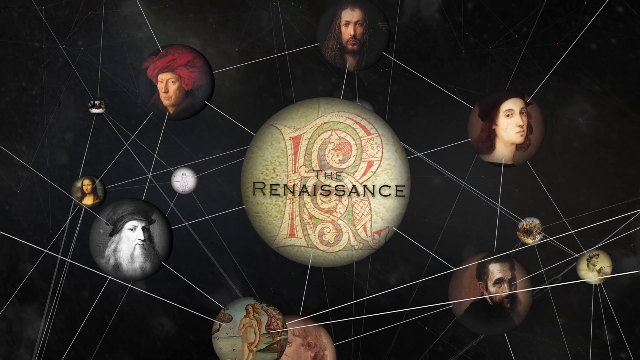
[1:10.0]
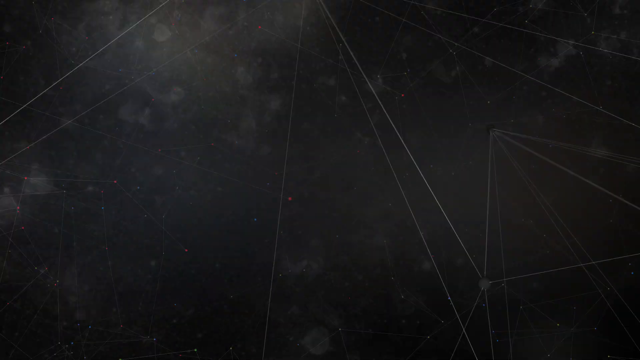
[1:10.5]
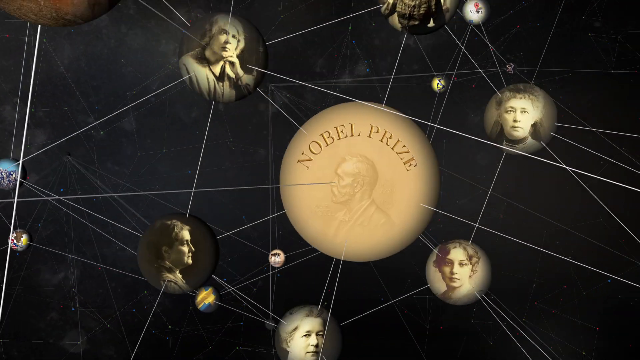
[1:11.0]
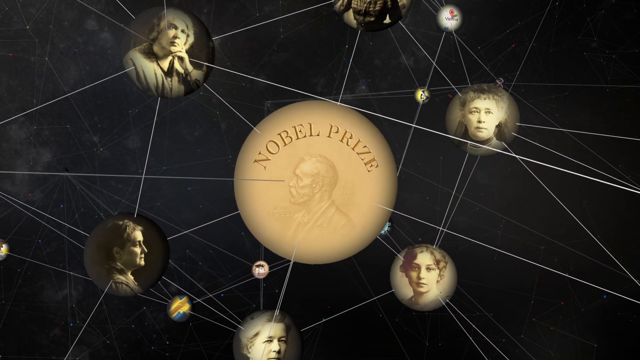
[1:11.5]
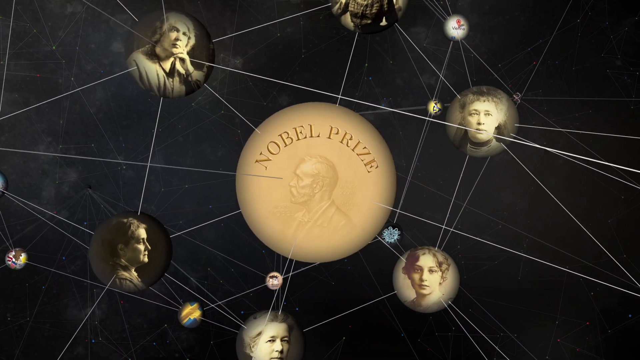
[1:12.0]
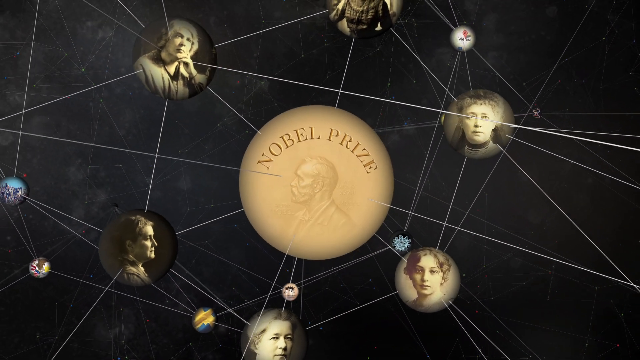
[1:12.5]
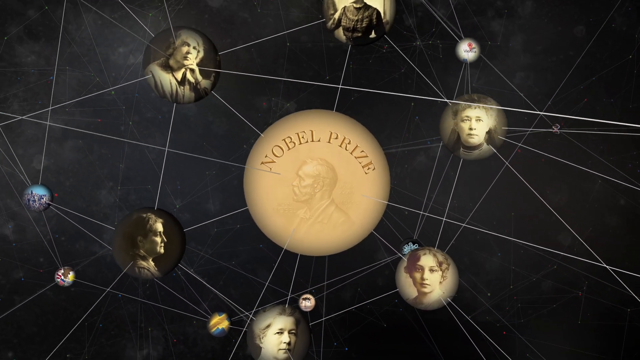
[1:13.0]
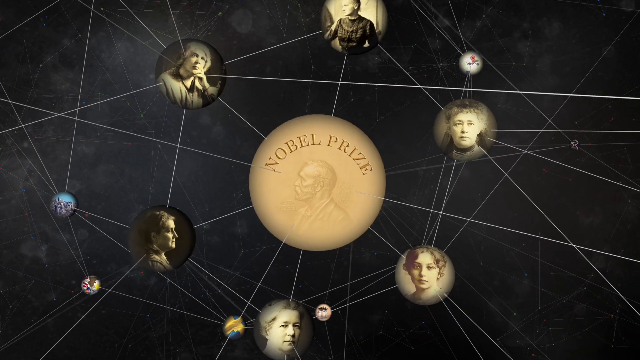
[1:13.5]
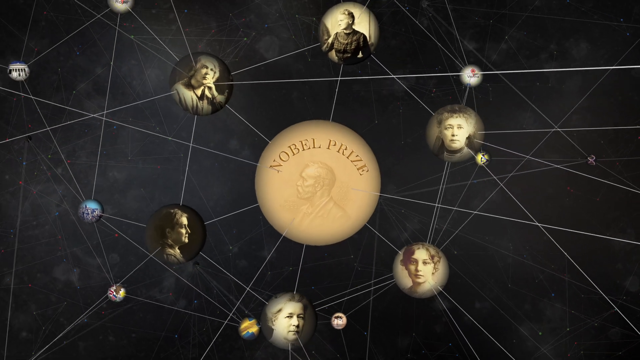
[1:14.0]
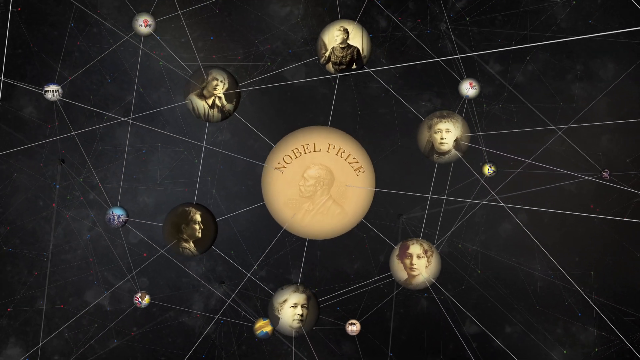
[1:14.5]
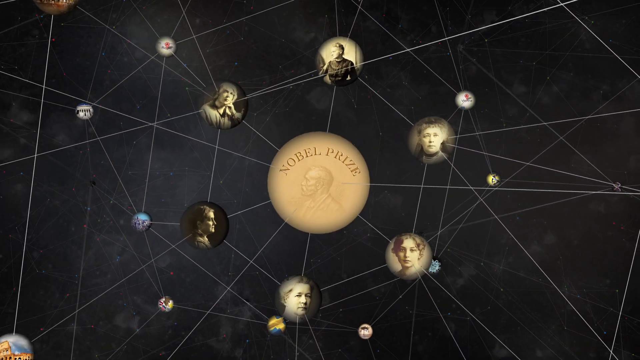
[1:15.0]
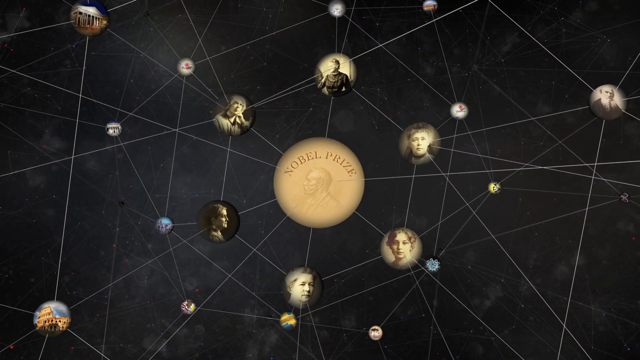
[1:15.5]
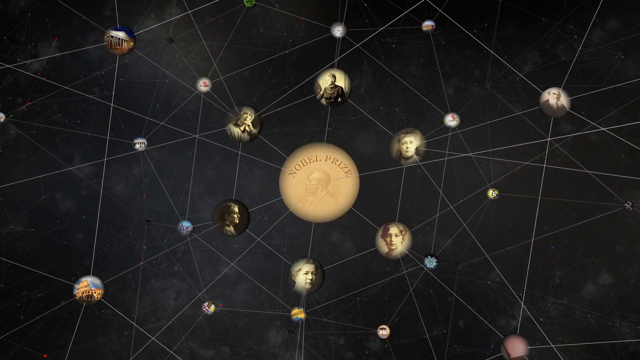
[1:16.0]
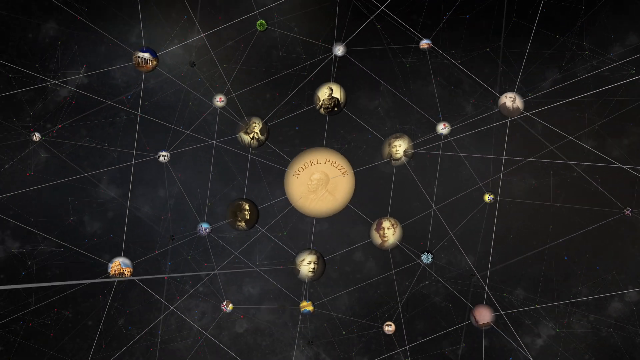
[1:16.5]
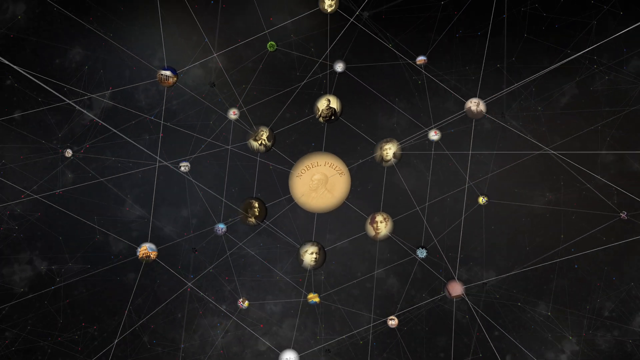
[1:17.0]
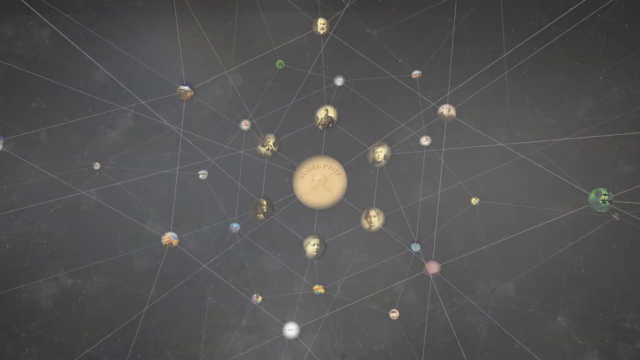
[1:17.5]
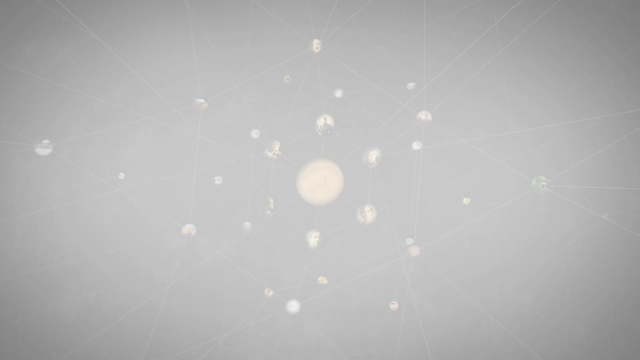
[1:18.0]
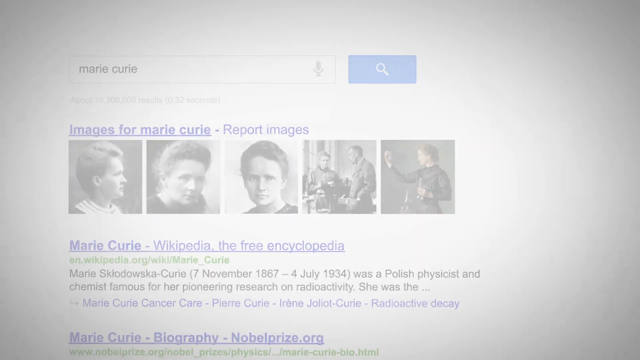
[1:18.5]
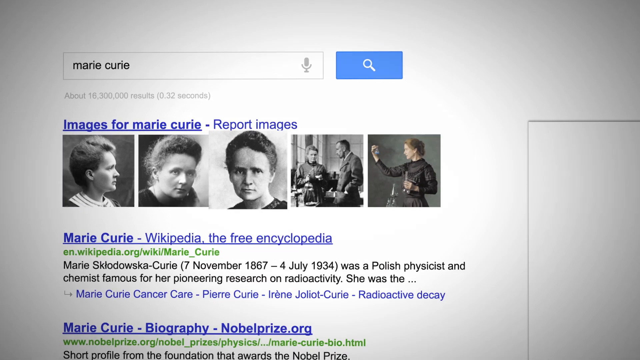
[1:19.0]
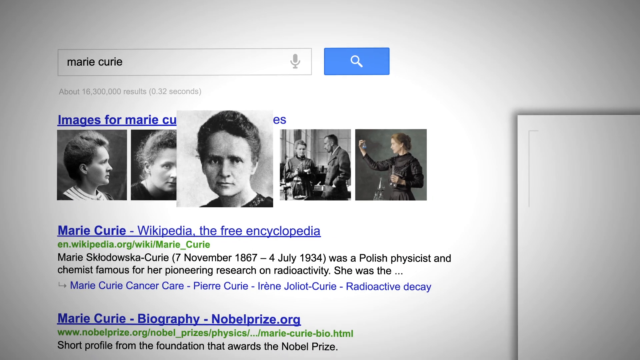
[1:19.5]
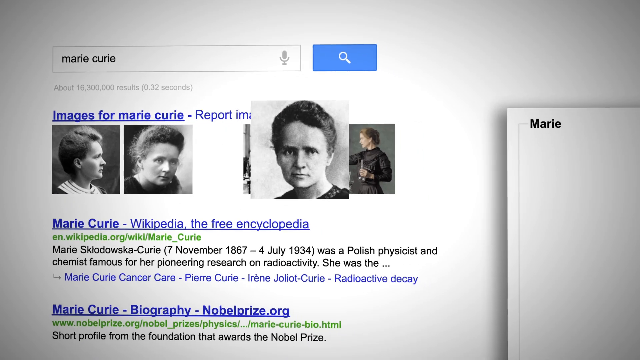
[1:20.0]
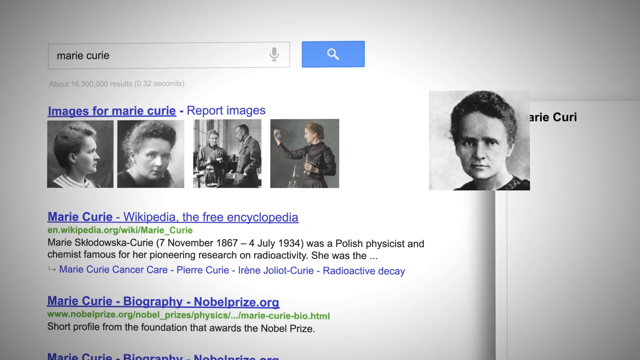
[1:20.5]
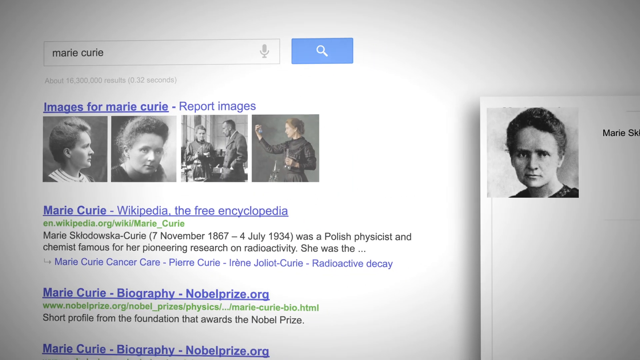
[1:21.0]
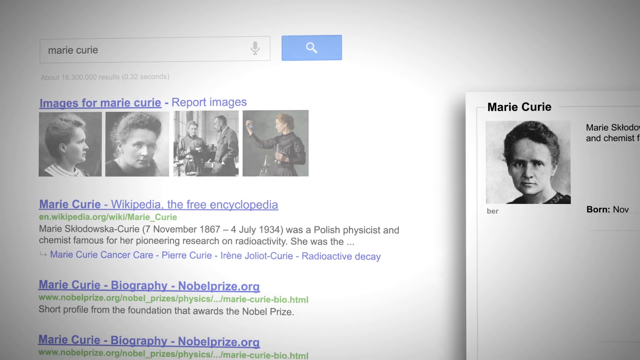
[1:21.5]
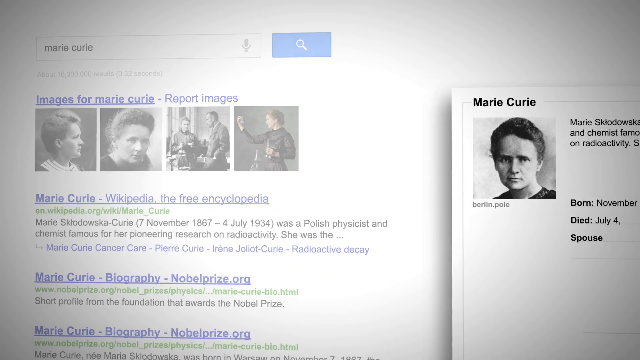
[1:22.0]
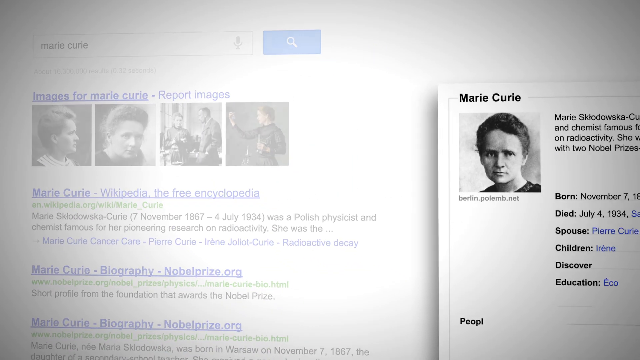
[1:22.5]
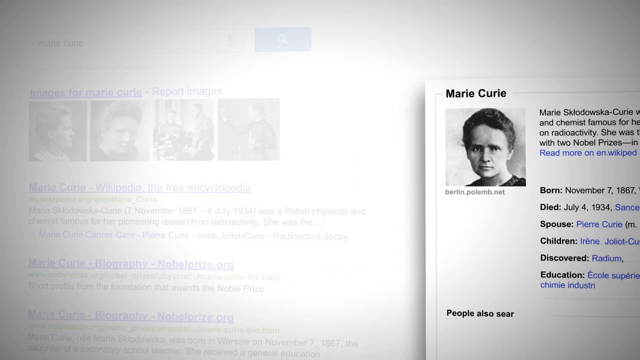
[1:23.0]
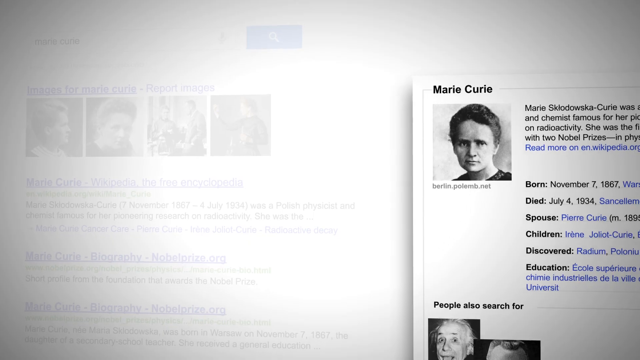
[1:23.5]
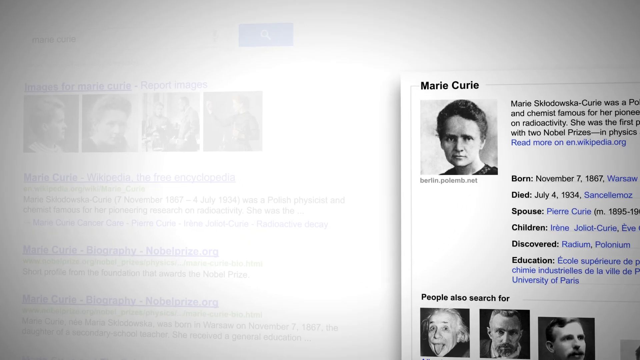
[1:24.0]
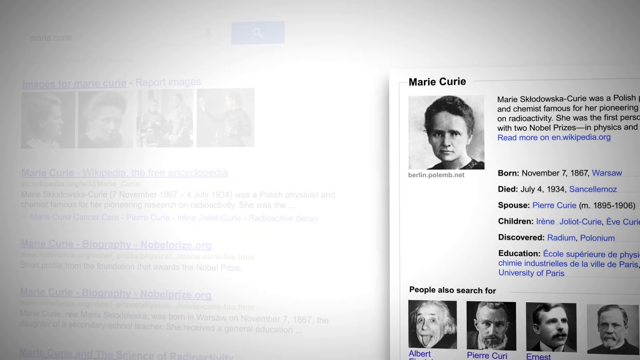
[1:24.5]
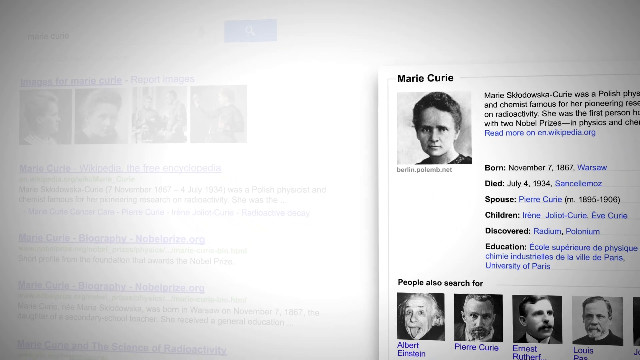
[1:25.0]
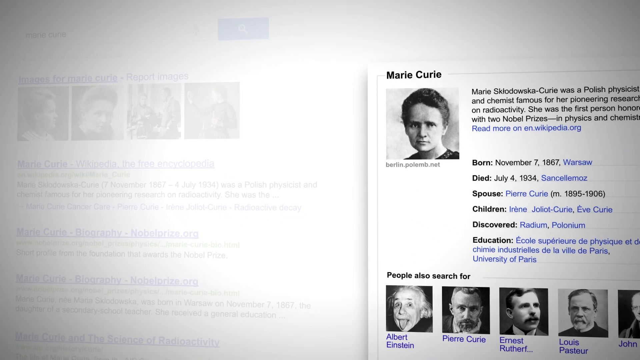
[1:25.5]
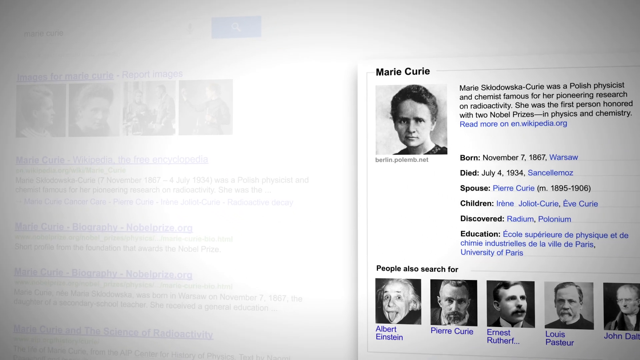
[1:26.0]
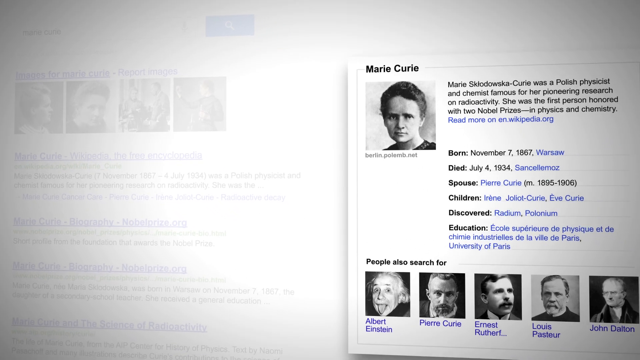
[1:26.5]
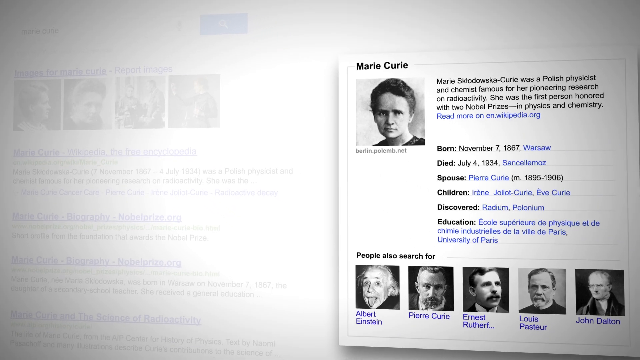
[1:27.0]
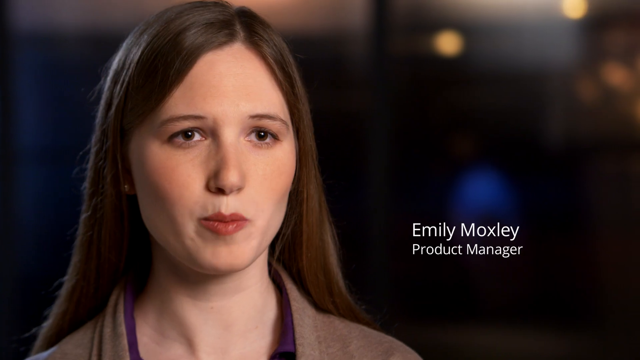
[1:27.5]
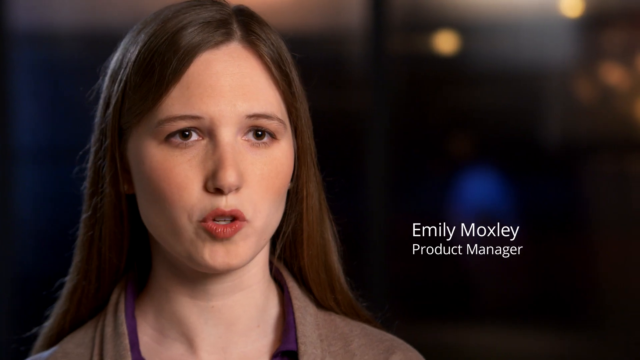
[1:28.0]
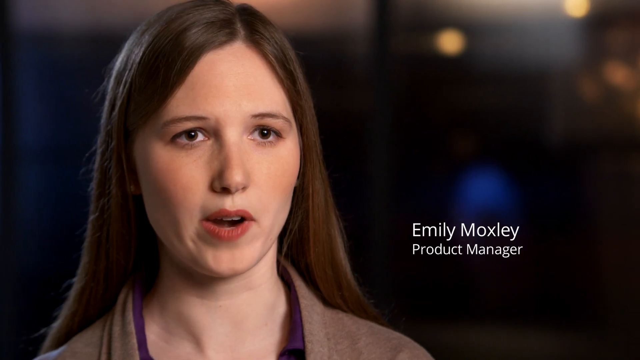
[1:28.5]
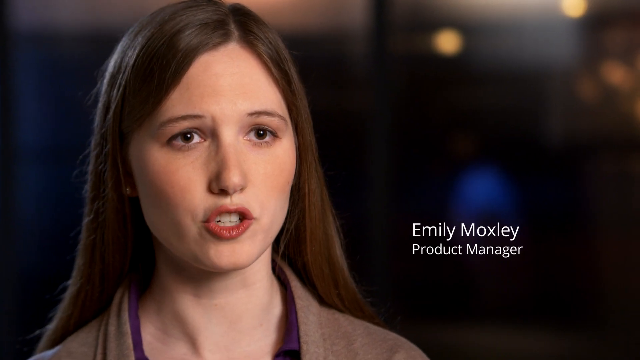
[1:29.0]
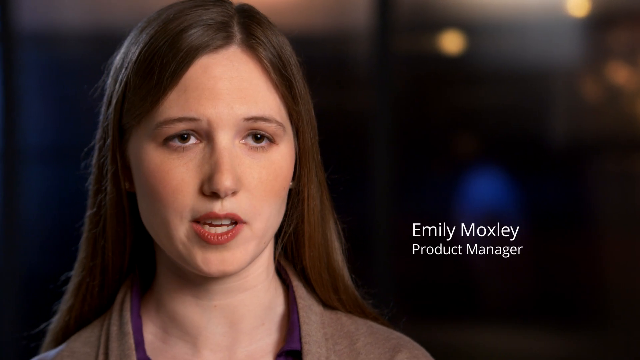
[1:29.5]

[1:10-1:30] On a black background, lots of thin white lines connect circles containing images. The view zooms in on one labeled "Nobel Prize" with the outline of a man facing left, and many people are connected to this node, presumably Nobel Prize recipients. The view kind of zooms out and the image fades into a search window on a computer, with "Marie Curie" in the search box. Below it are images of Marie Curie, and below those a link reading "Marie Curie Wikipedia, the free encyclopedia". On the right side is a sort of cutout description of Marie Curie with an image of her, a short descriptive paragraph, and basic facts about when she was born and died and who her spouse and children were. The page kind of pans out, appearing to move toward the center of the screen. It then switches to a woman with long brown hair and brown eyes talking to the camera, with the text "Emily Moxley, product manager"; she talks for a few more seconds.